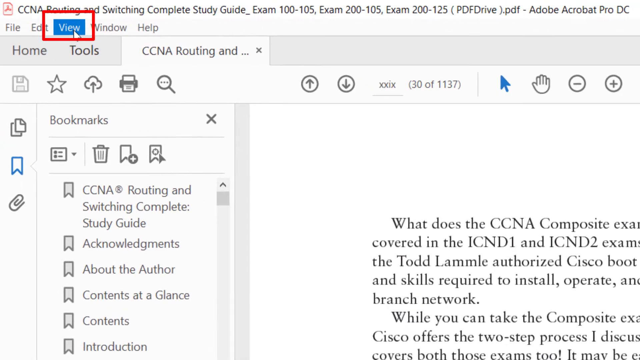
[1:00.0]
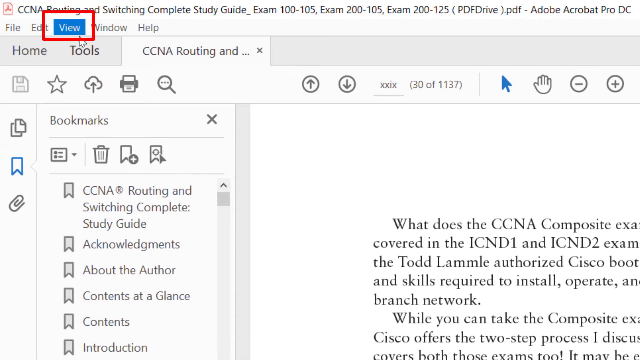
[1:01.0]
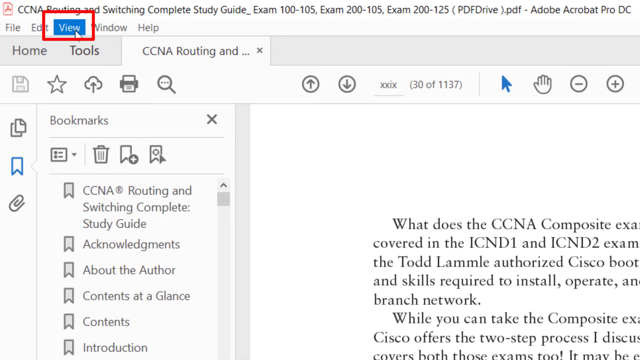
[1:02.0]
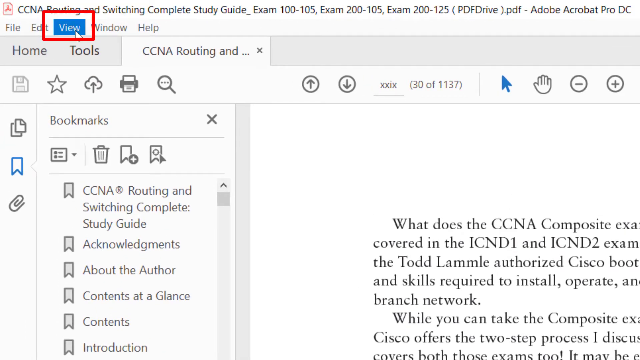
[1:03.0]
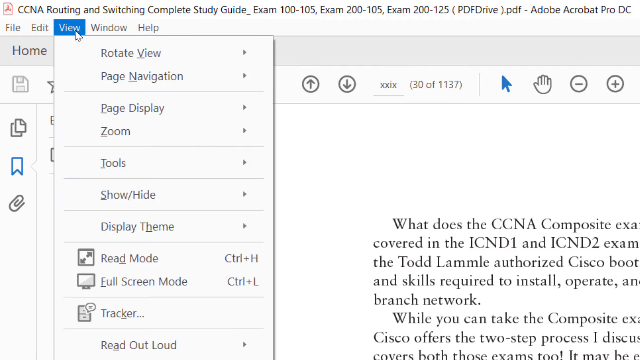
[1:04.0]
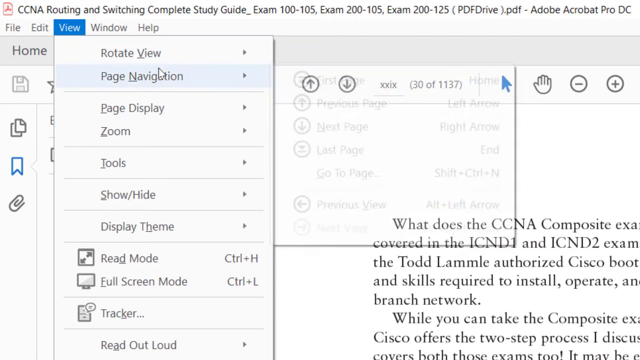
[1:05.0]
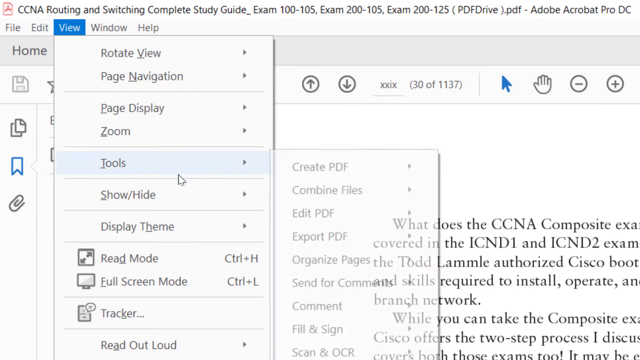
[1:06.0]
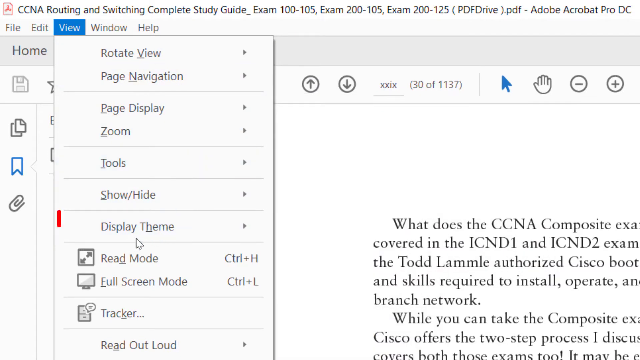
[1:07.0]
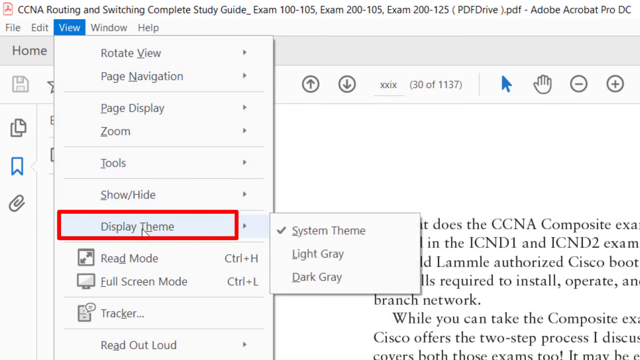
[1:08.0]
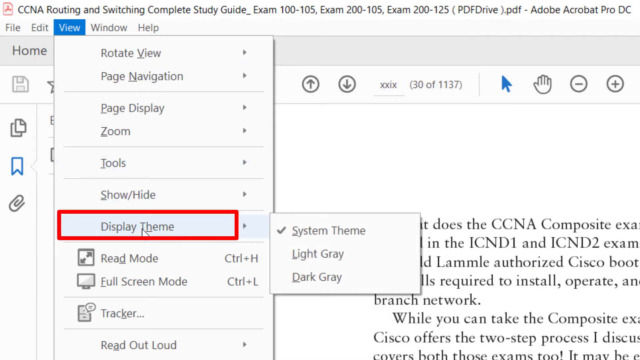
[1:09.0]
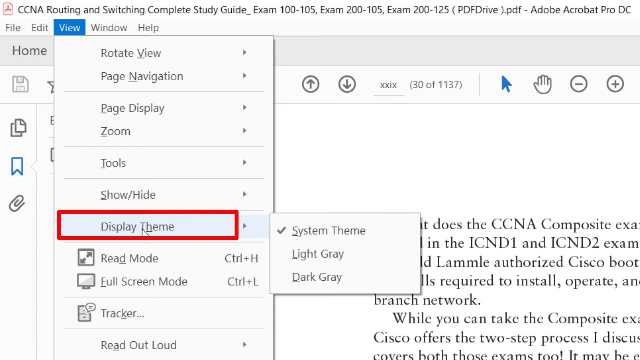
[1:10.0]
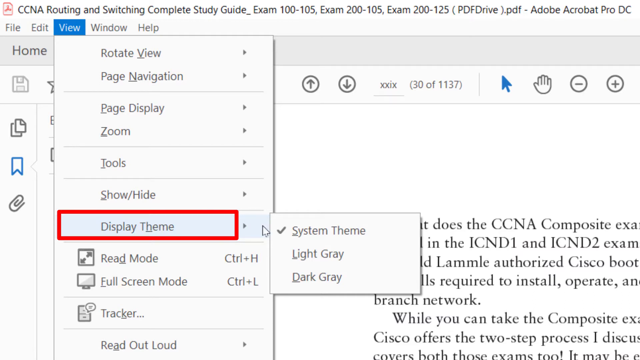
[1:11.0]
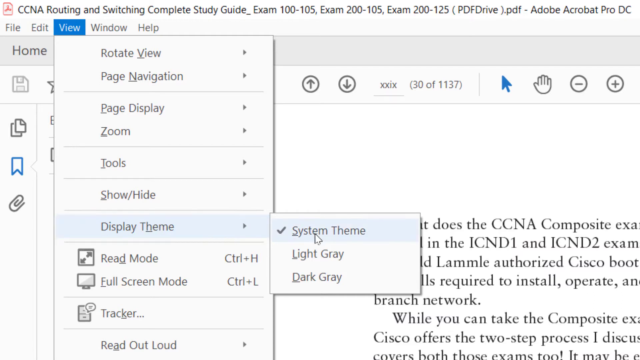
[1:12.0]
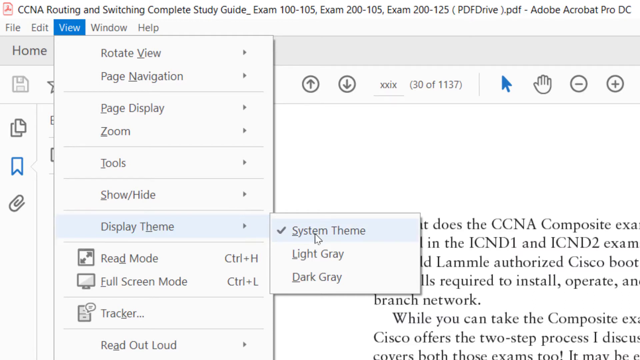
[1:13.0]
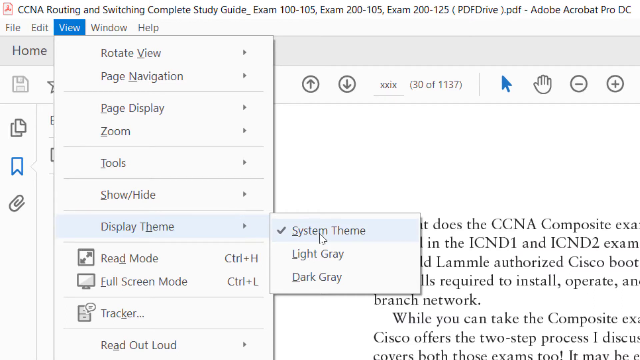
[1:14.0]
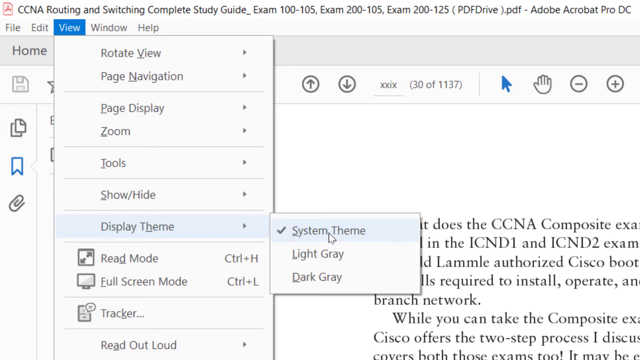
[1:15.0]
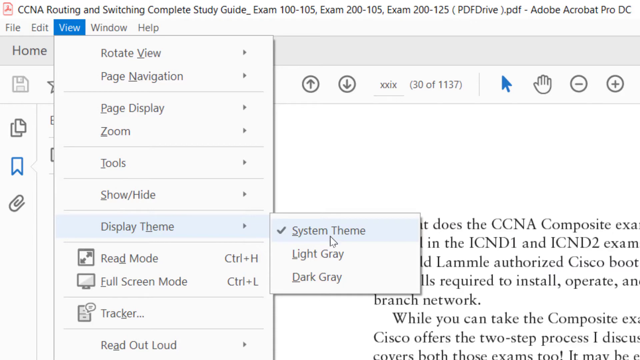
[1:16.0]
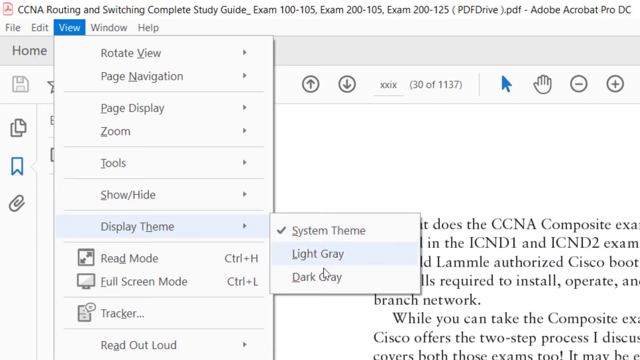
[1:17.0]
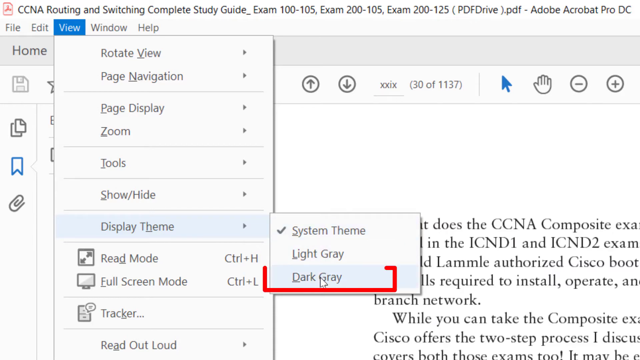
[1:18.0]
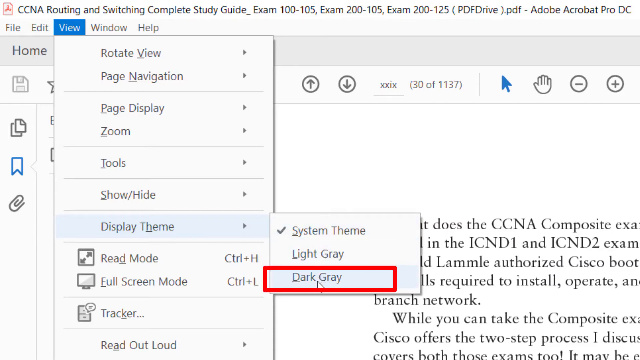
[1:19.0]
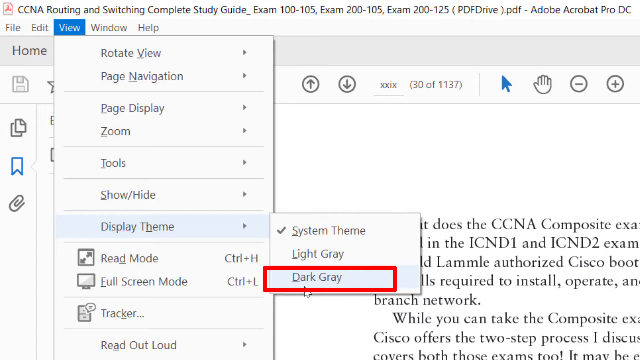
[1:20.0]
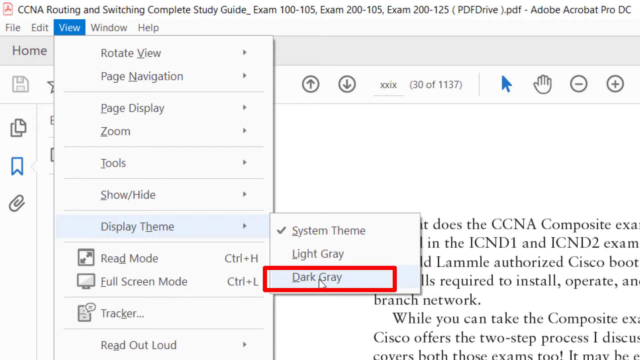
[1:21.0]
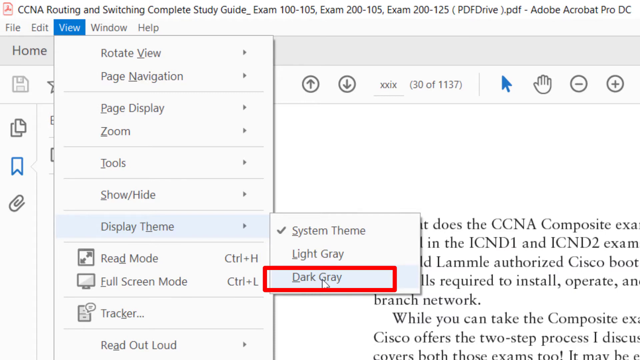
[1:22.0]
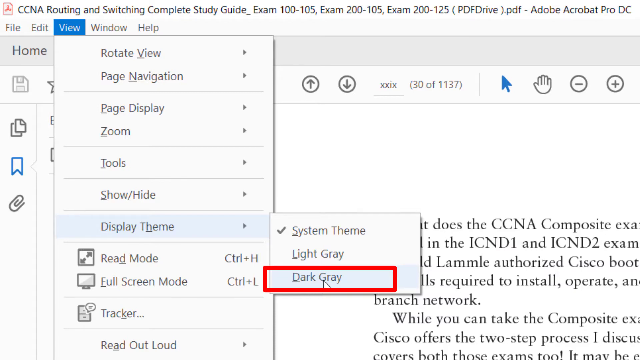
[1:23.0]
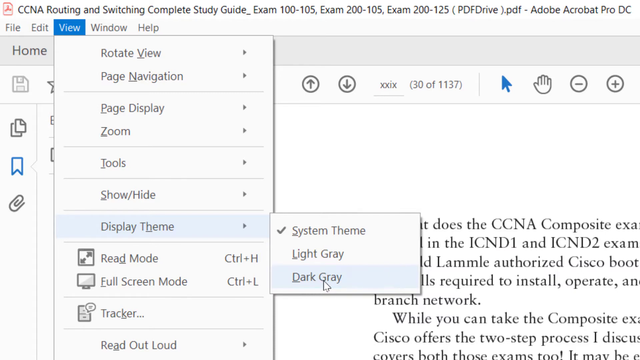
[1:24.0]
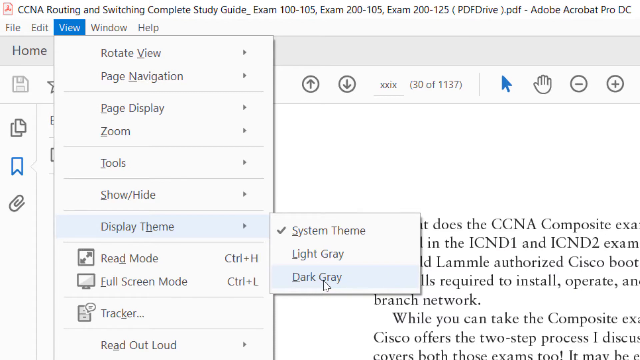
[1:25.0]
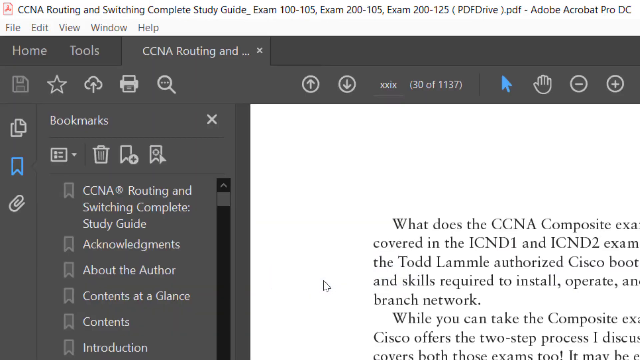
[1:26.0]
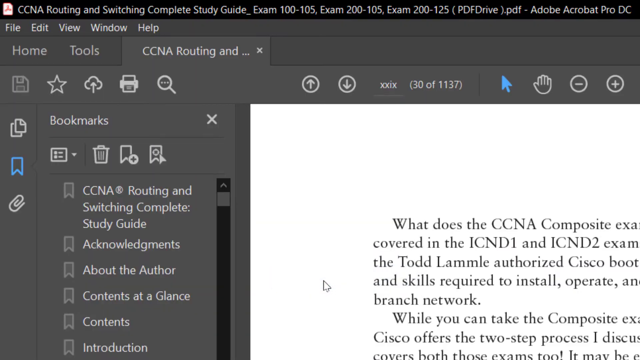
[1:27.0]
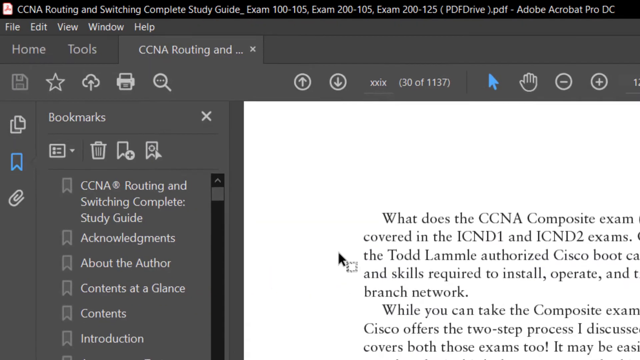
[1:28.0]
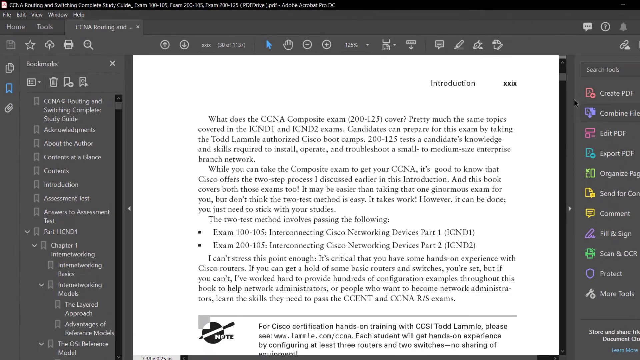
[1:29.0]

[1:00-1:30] The pointer hovers over the blue rectangle that says "view" in white text, with a red rectangle bordering the button to draw attention to this step. A rectangular box appears beneath it. The mouse moves down seven lines to the option "display theme," and another red box forms around it. A side box pops up listing "system theme" with a check mark next to it, "light gray" below that, and "dark gray" underneath. The pointer moves down to "dark gray," and a red rectangle forms around it. The screen then changes so that everything outside the white document in the middle becomes dark gray.